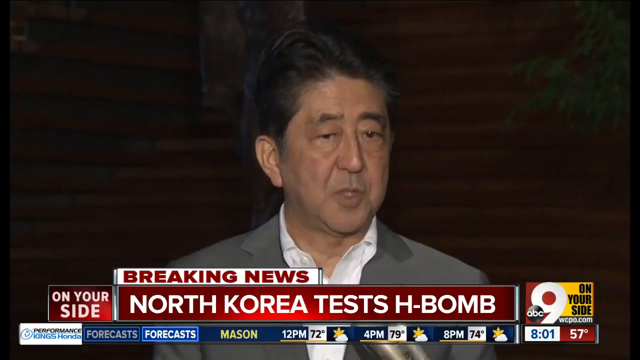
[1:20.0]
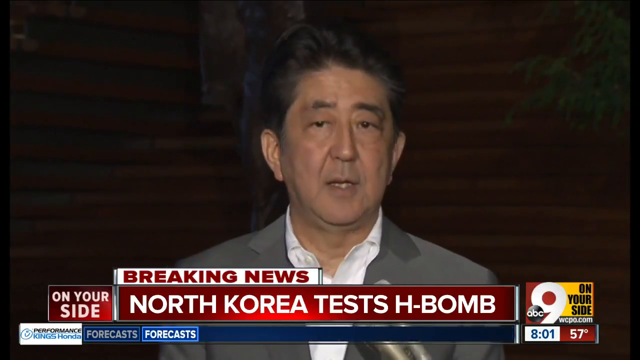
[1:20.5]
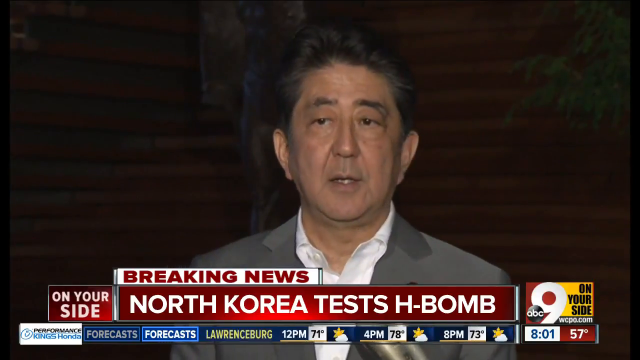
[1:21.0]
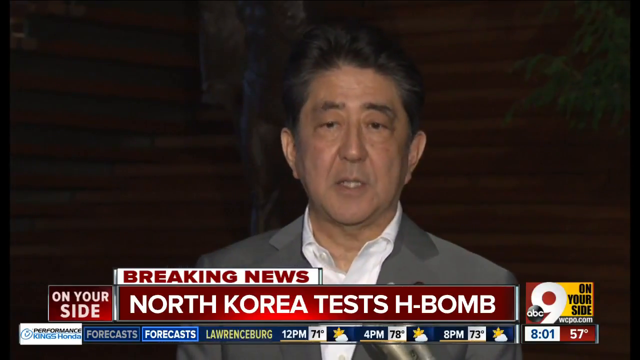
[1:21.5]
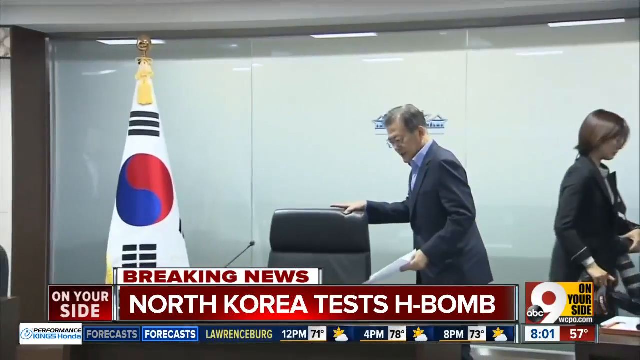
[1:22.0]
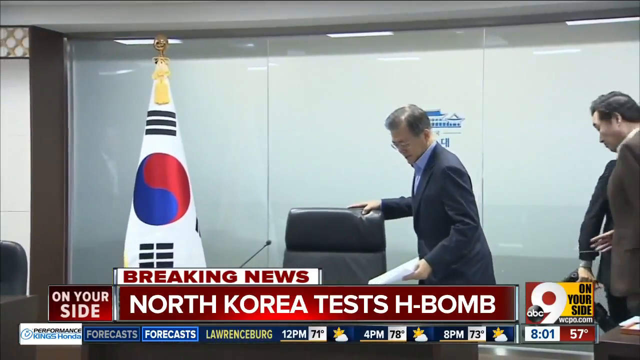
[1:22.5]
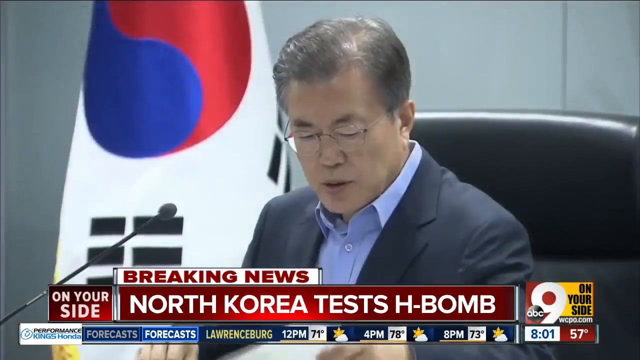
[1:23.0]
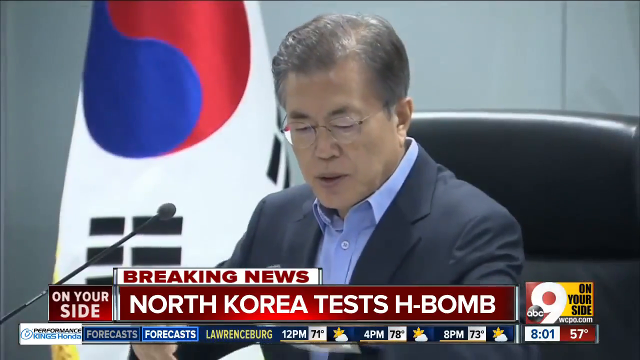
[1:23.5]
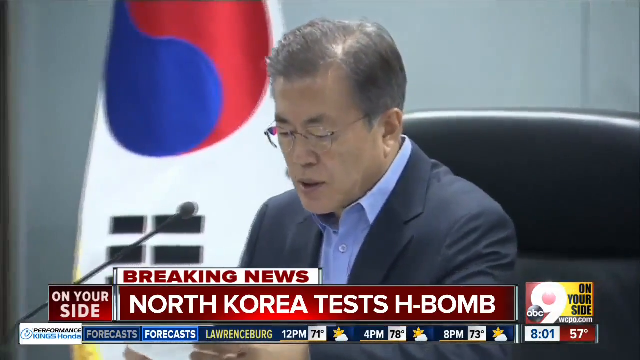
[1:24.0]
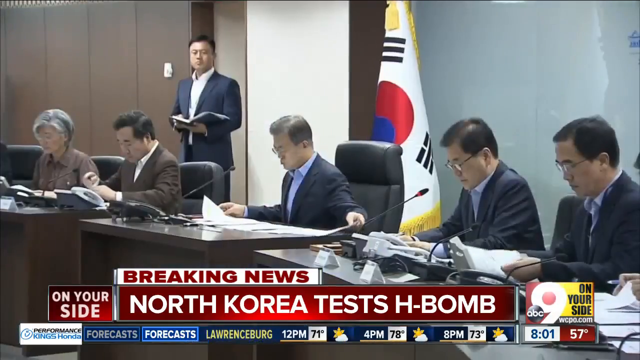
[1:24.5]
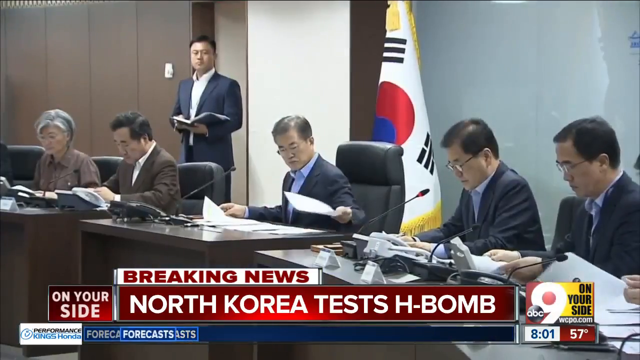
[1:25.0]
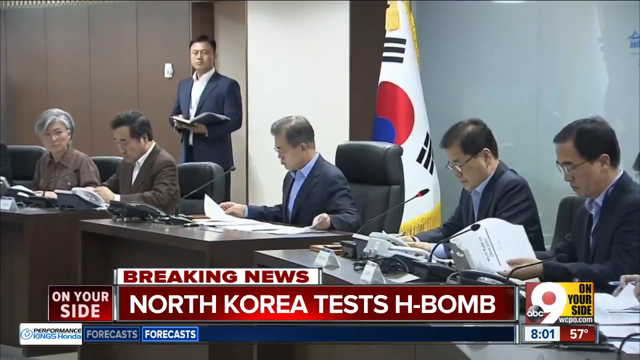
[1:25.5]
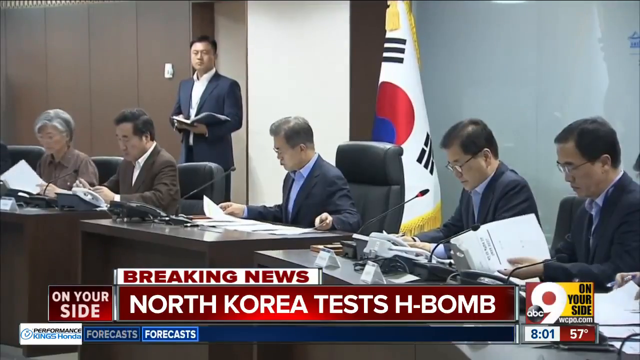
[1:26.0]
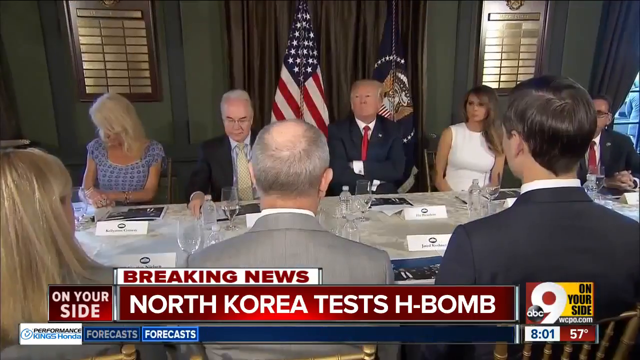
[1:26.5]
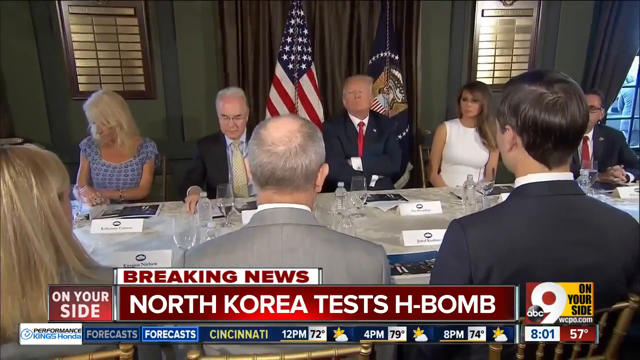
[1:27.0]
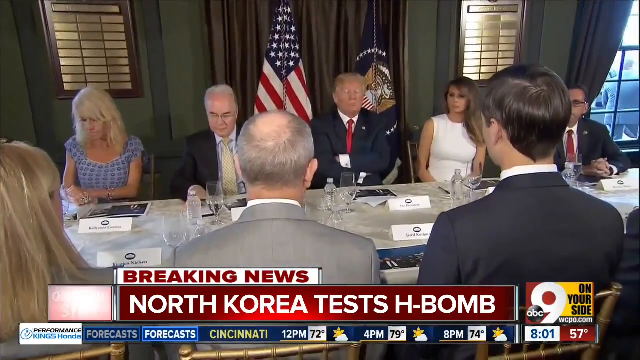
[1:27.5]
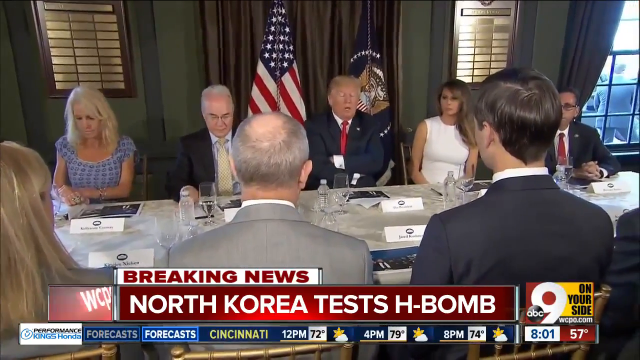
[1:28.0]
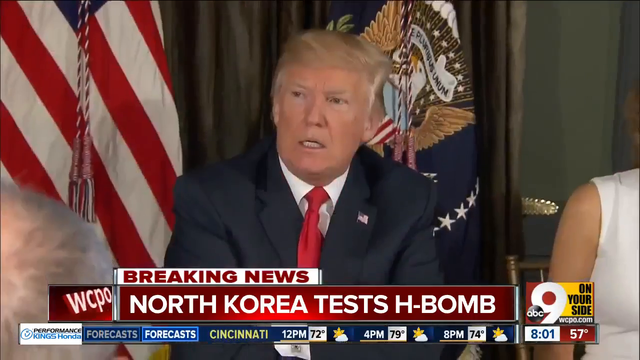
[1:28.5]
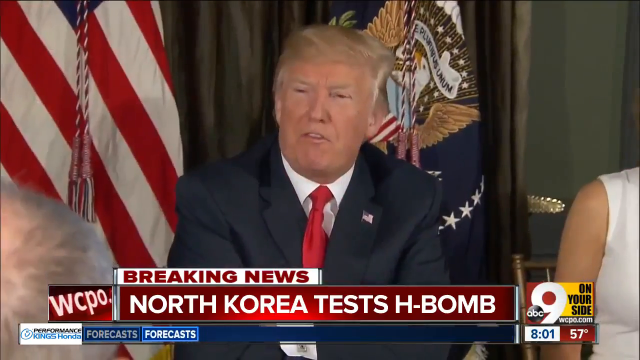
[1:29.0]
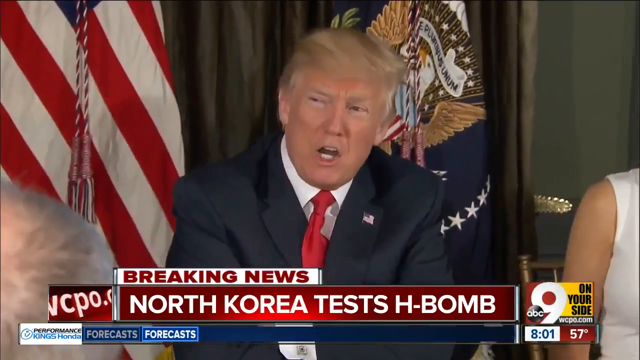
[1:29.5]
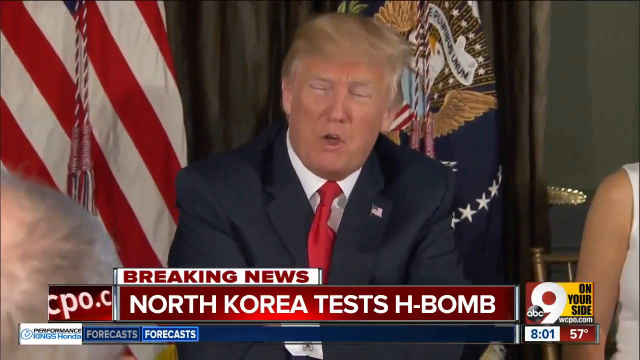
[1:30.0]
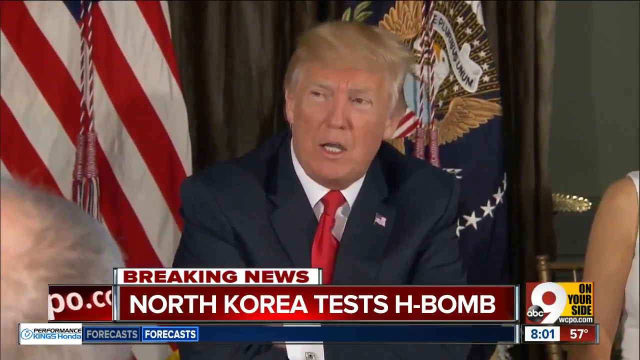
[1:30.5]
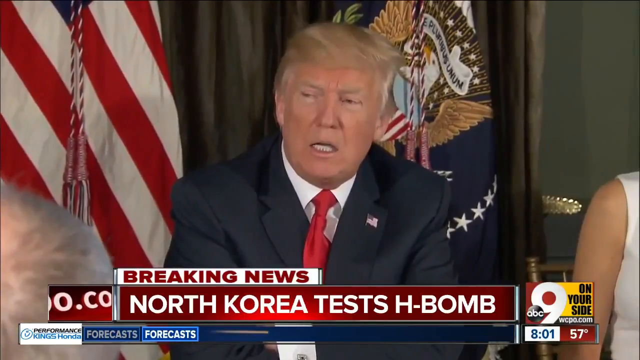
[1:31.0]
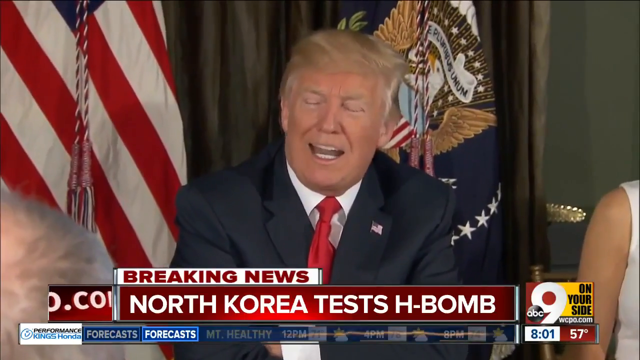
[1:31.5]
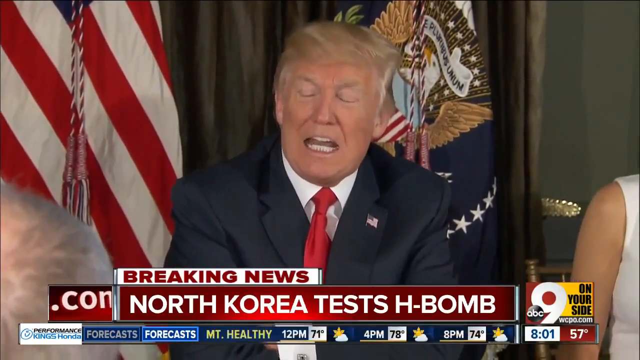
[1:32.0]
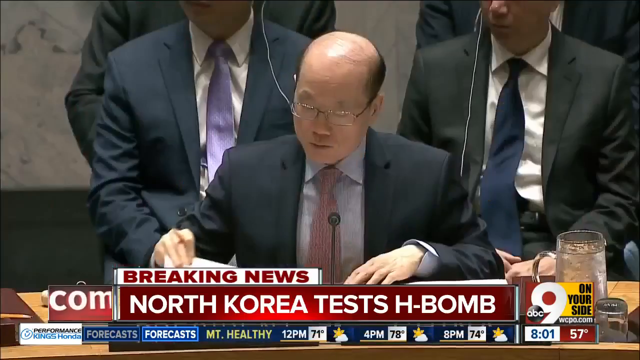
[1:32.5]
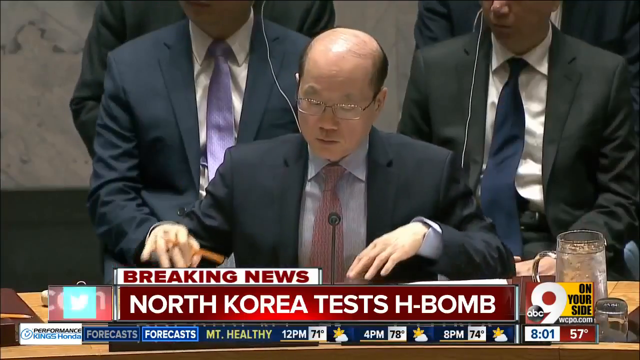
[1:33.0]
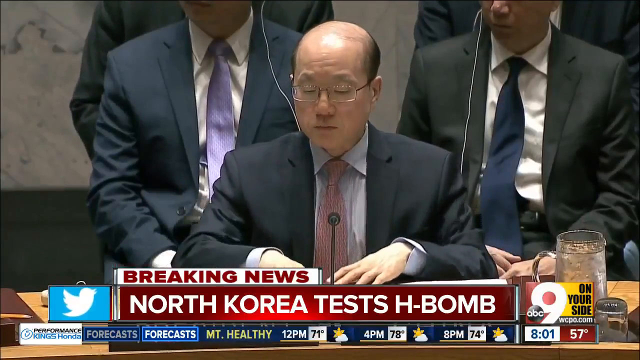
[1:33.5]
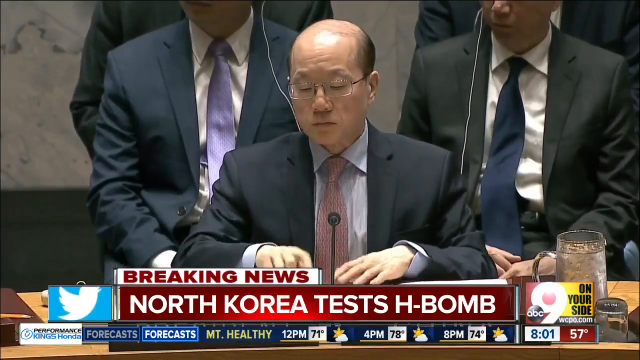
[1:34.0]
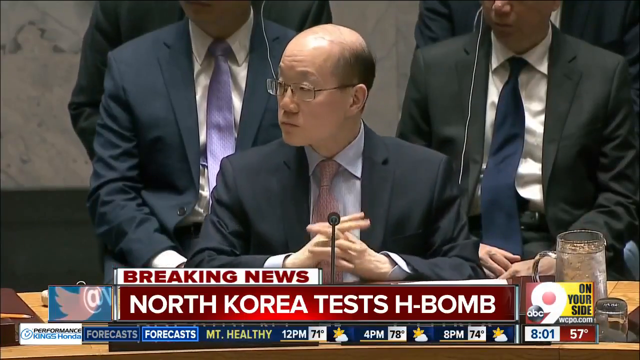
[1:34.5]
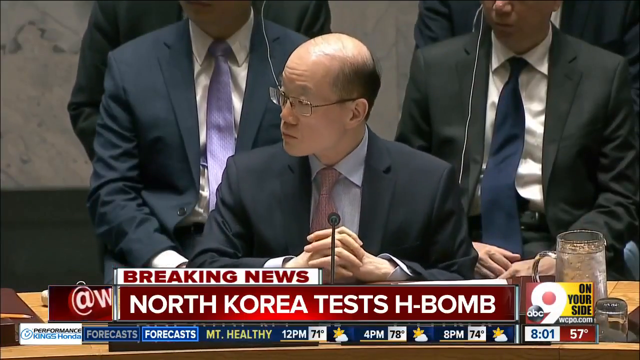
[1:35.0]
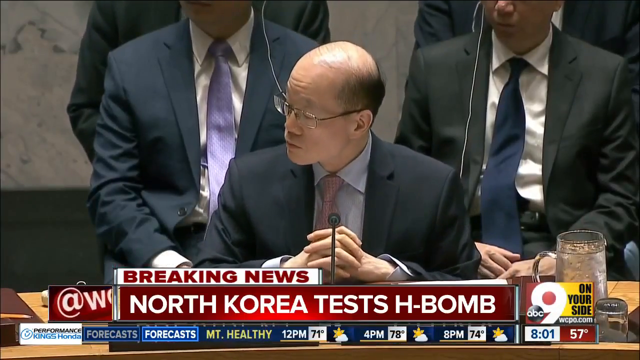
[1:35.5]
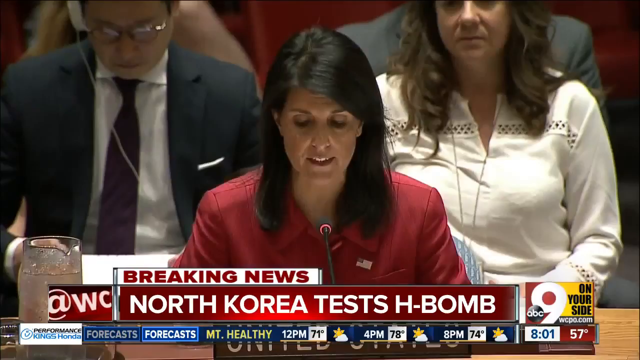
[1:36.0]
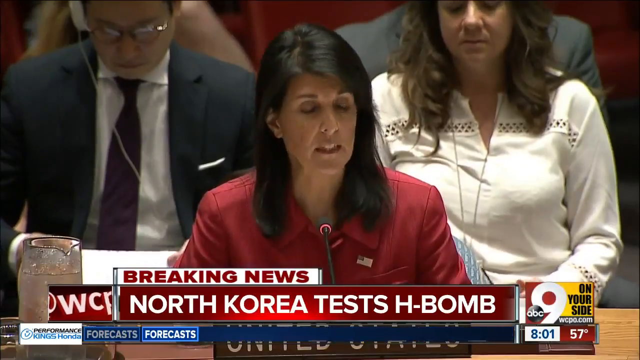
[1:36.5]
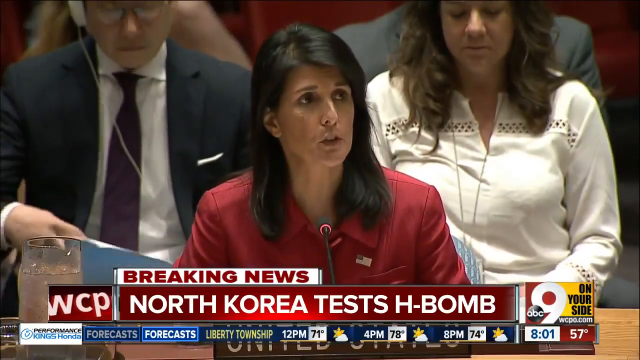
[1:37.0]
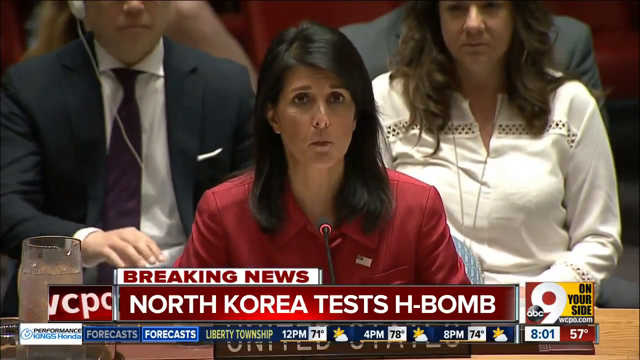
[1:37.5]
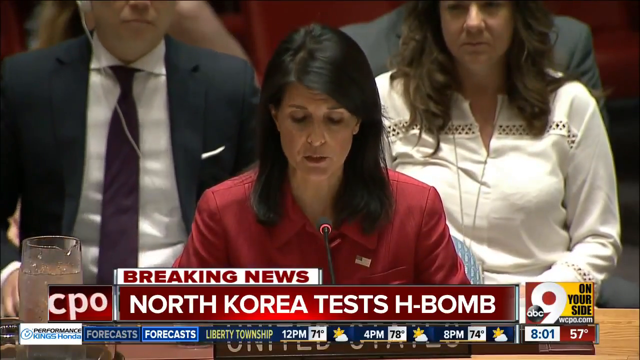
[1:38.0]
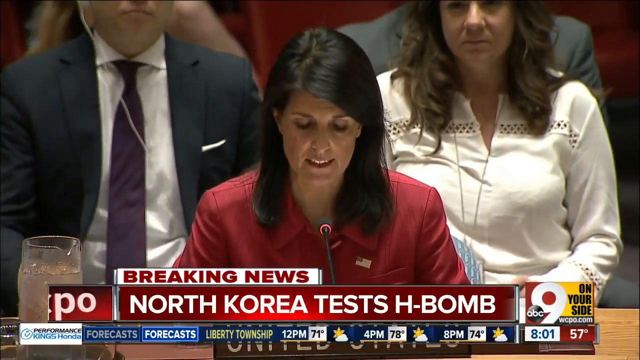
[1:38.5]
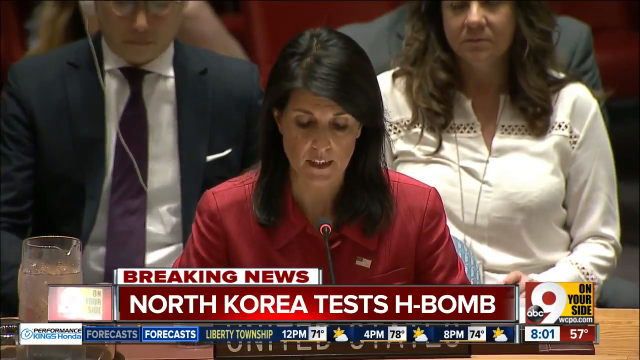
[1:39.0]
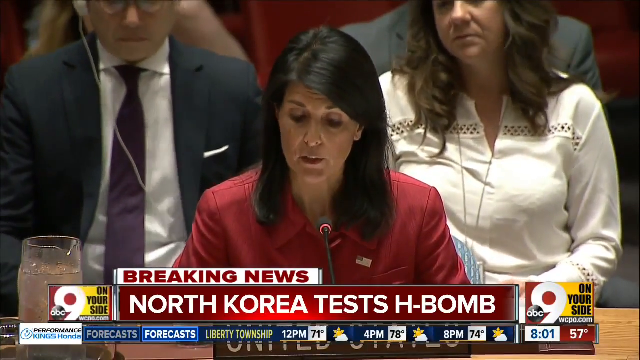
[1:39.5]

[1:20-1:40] Another man, in a gray suit with a white dress shirt, speaks to the camera. At the bottom of the screen text reads "Breaking news North Korea tests H-bomb", with "On your side" to its left, and at the very bottom of the screen is the weather forecast for Lawrenceburg. Video footage then shows what looks like a press room, with a flag on the left: a white flag with a blue and red yin yang in the middle. A man walks in from the left holding a piece of paper in his left hand, grabs the back of a chair with his right hand to move it out of the way, and sits down in it. He looks down and to his left at a piece of paper held in his right hand while picking up other papers with his left hand. He is flanked by two people on either side, also sitting at desks looking through papers, and each has a microphone in front of them.